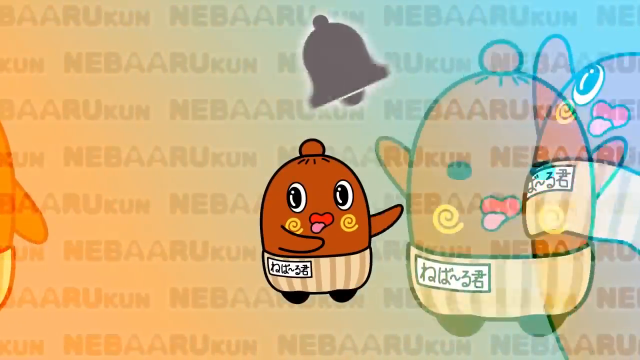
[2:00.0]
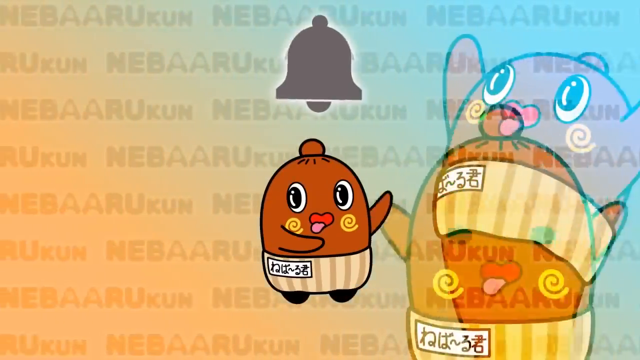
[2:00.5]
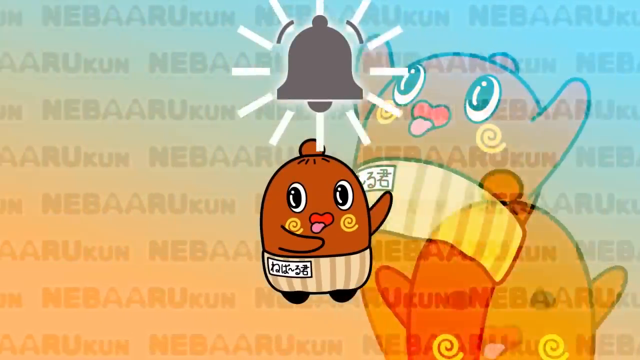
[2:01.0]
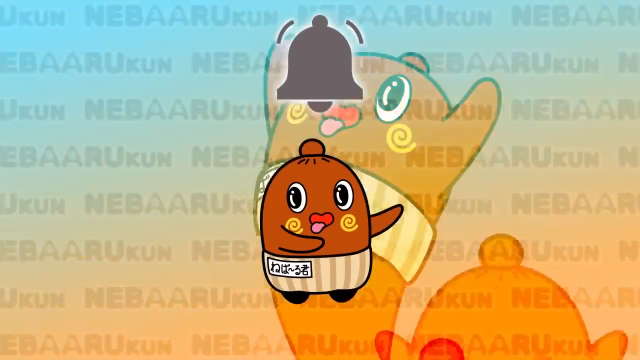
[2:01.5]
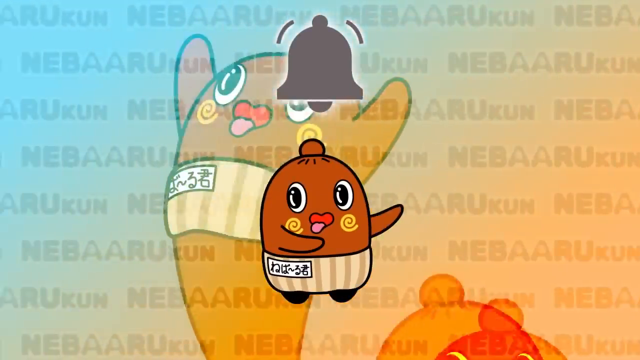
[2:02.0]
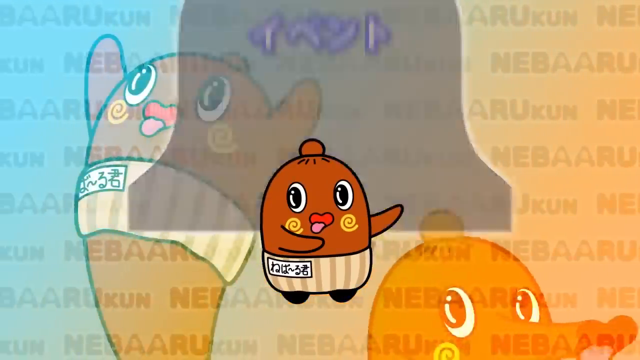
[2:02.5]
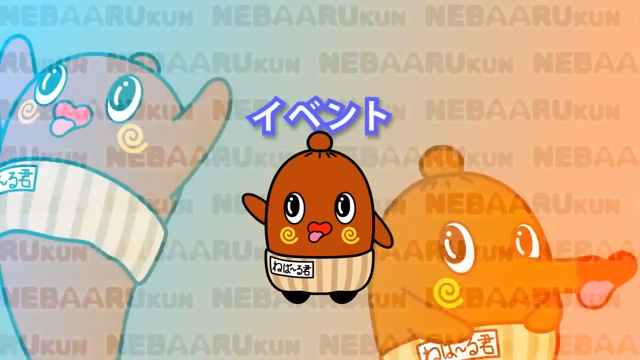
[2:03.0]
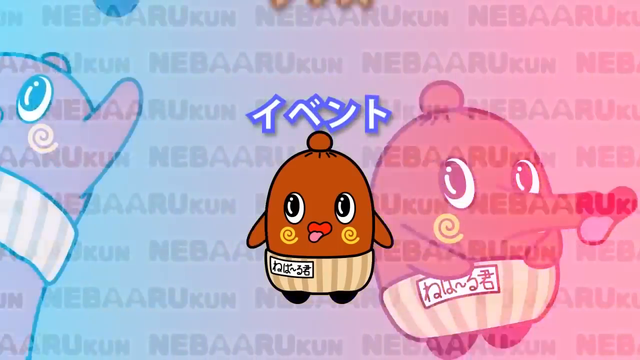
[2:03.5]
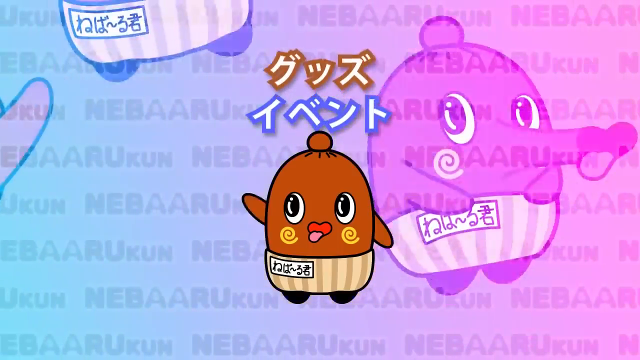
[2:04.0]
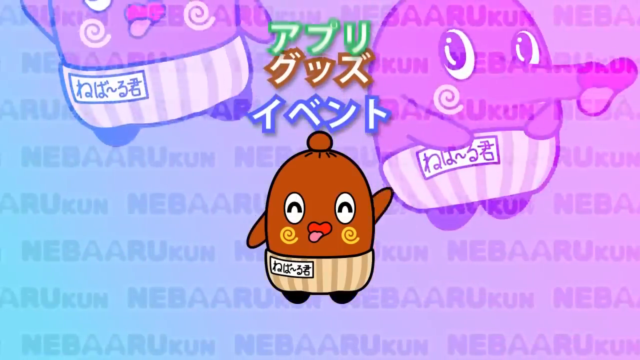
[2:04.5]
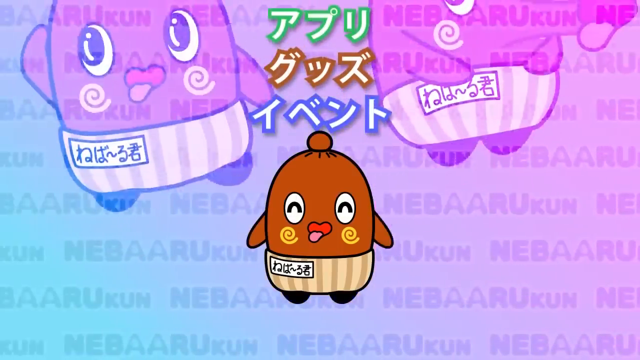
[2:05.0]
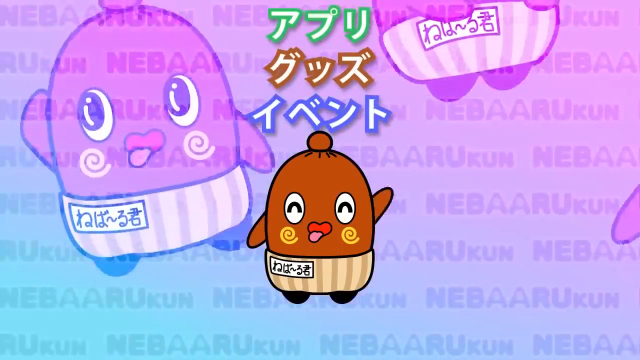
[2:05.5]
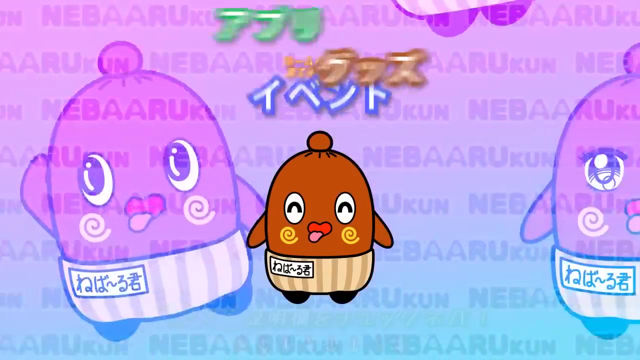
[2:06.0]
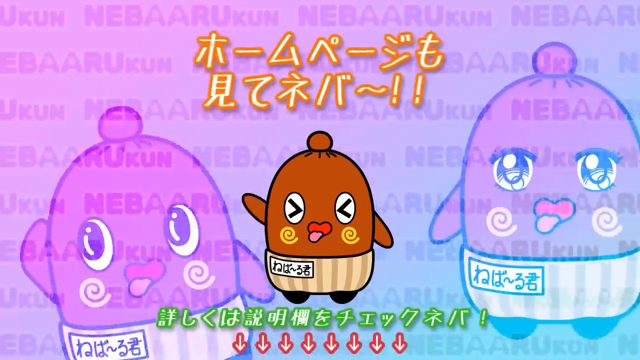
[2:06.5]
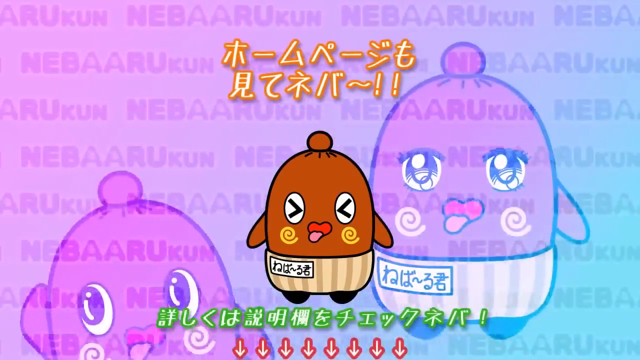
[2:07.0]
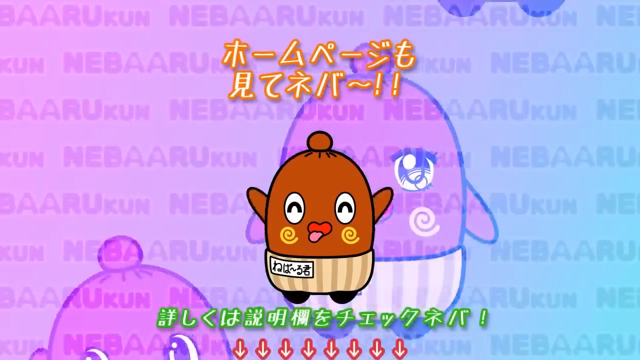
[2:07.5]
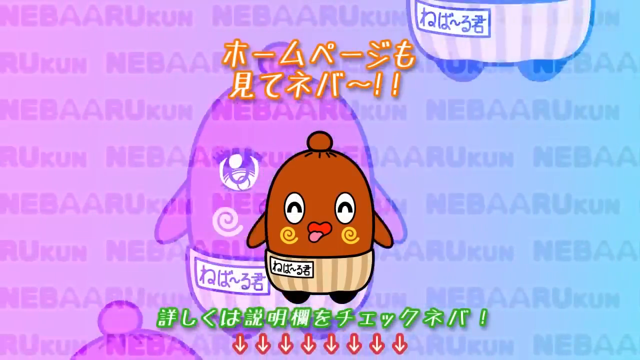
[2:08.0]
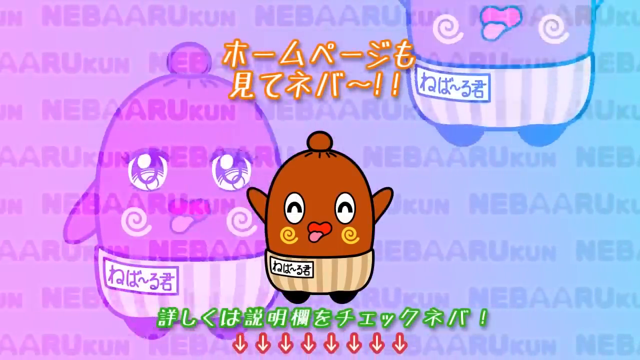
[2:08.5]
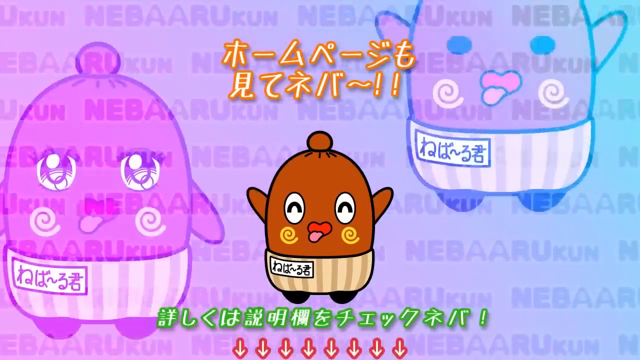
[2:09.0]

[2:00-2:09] The character waves beneath Japanese text that appears in various colors. The background is roughly an aqua-to-orange ombre, with the character shown in a couple of poses on the right and the left, and the "NEBAARUKUN" watermark still in the background. As the character waves, the background changes to a purple, blue and pink mix, with aqua, brown and blue text above it. It makes faces and smiles as first one arm, then the other, and then both arms wave. It ends with a kind of screwed-up face, as if something is distinctly unpleasant, against a cotton-candy pink, purple and blue background.